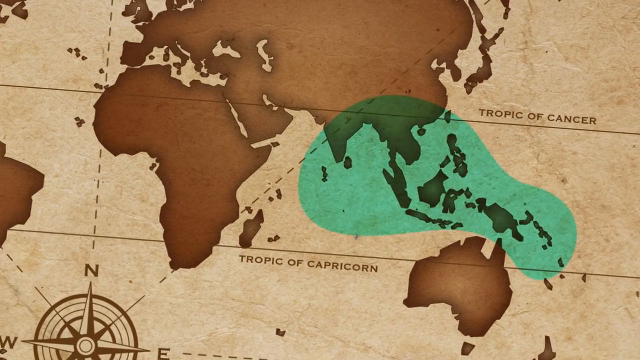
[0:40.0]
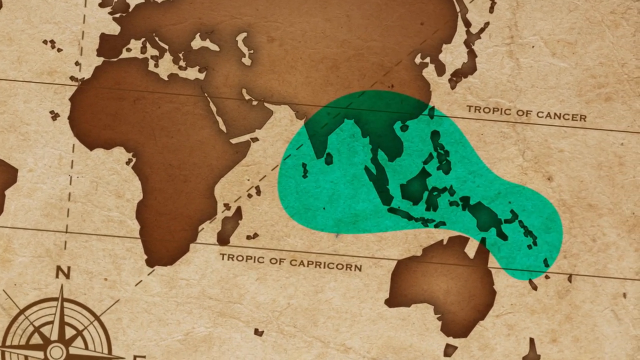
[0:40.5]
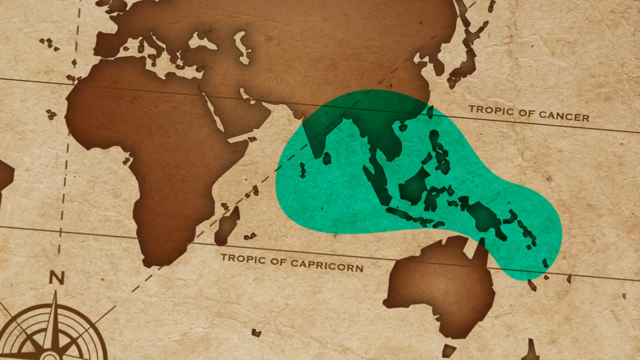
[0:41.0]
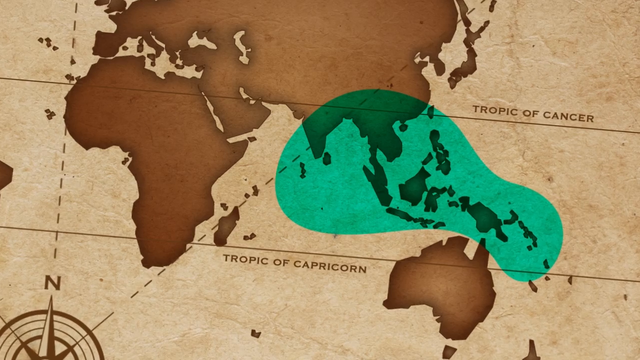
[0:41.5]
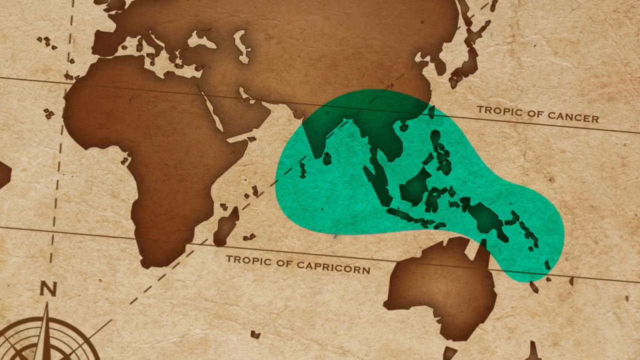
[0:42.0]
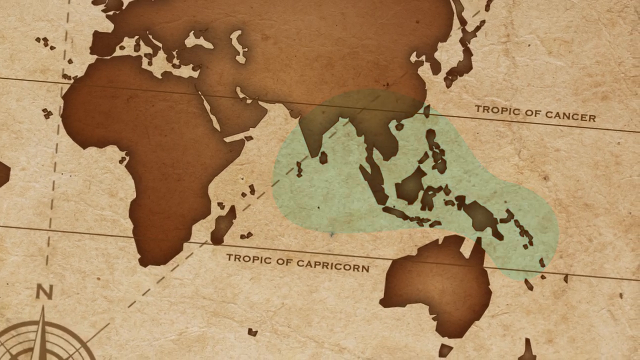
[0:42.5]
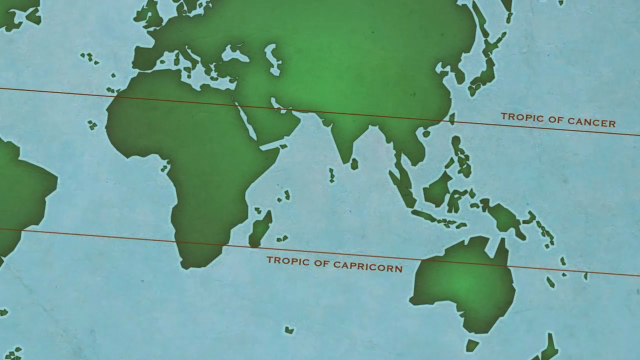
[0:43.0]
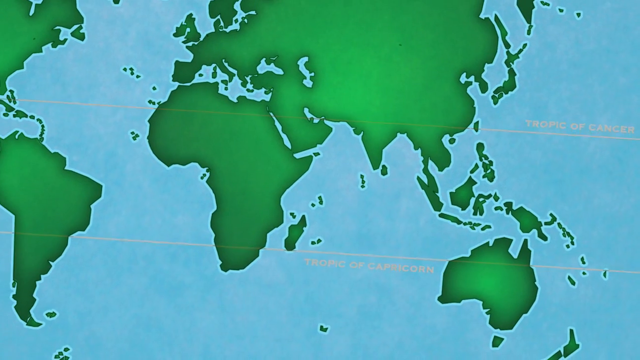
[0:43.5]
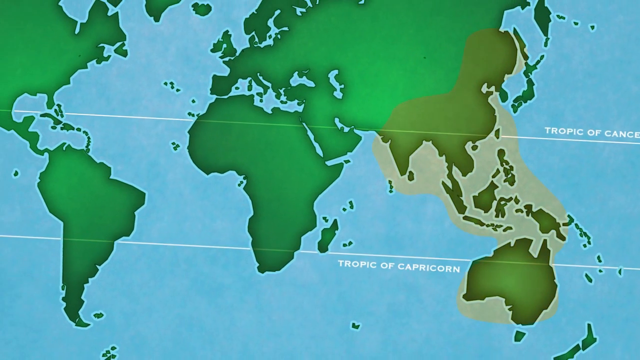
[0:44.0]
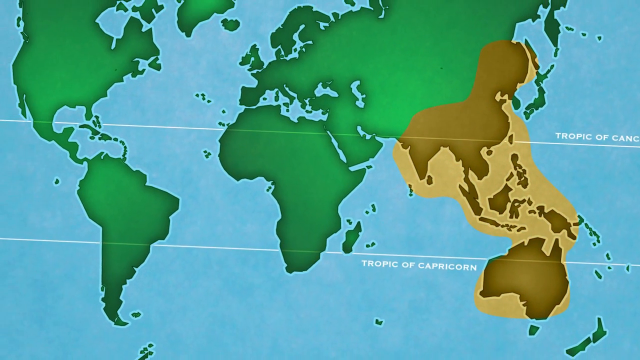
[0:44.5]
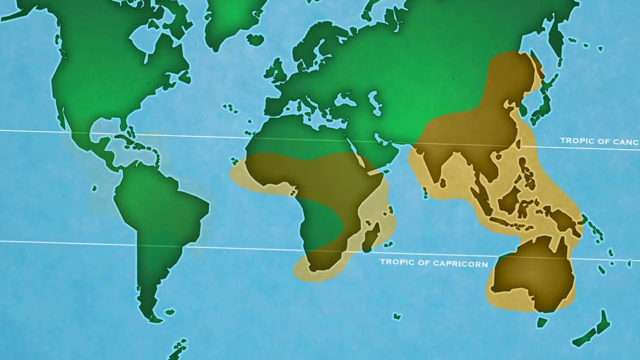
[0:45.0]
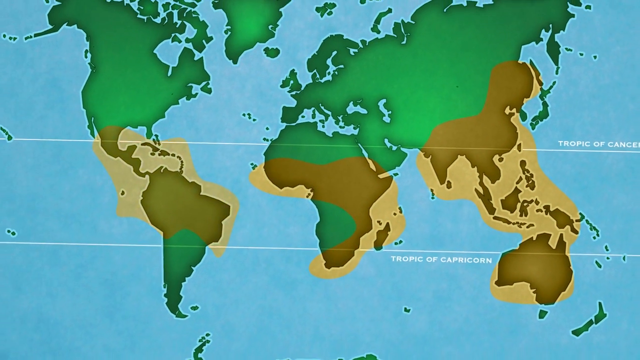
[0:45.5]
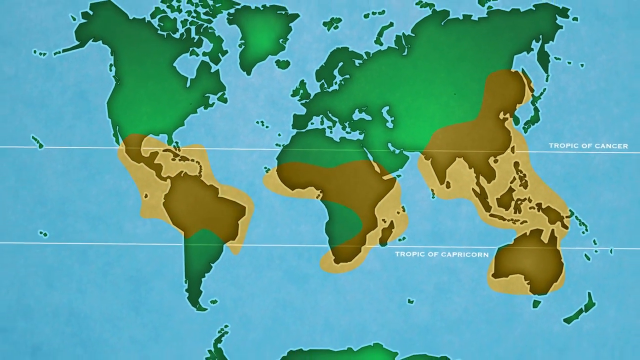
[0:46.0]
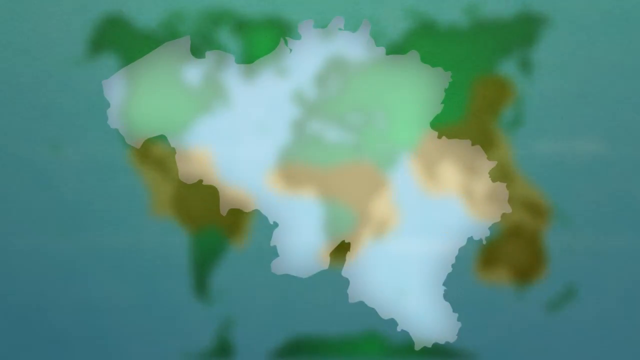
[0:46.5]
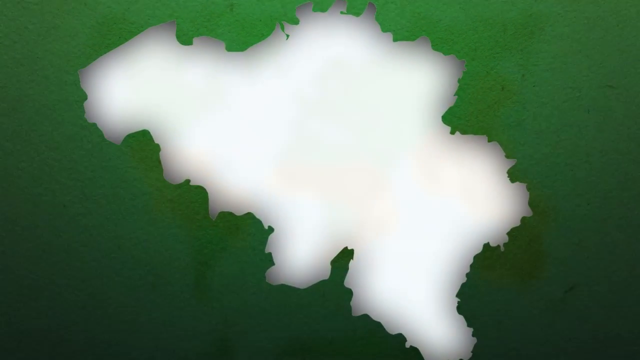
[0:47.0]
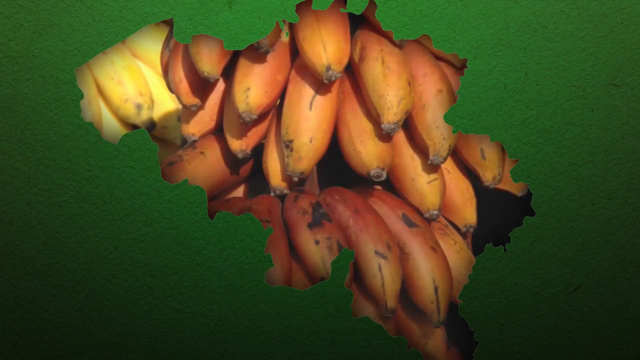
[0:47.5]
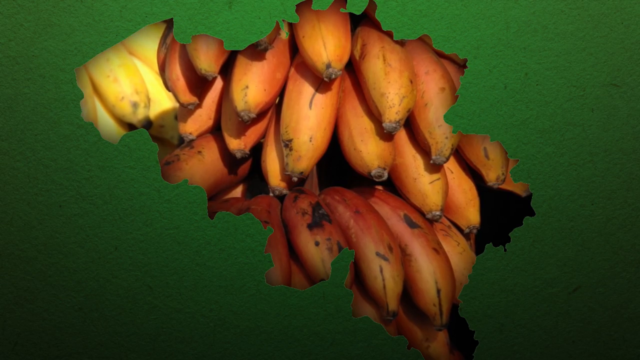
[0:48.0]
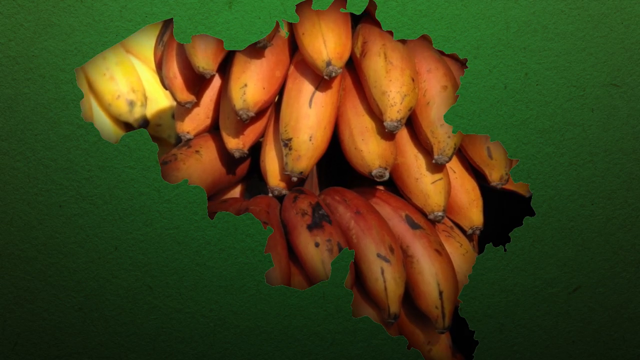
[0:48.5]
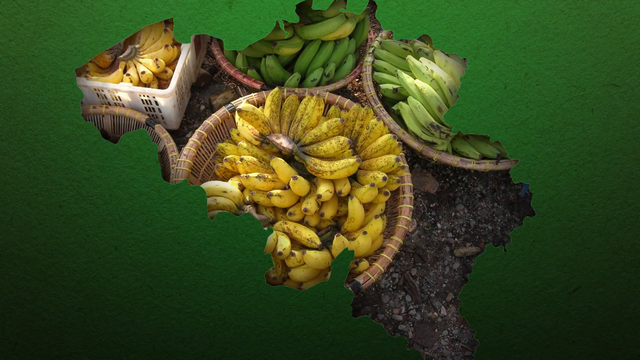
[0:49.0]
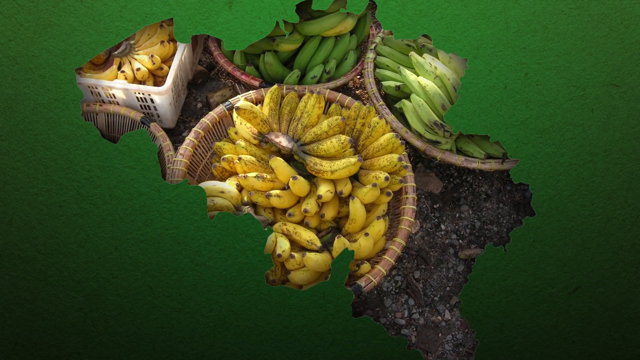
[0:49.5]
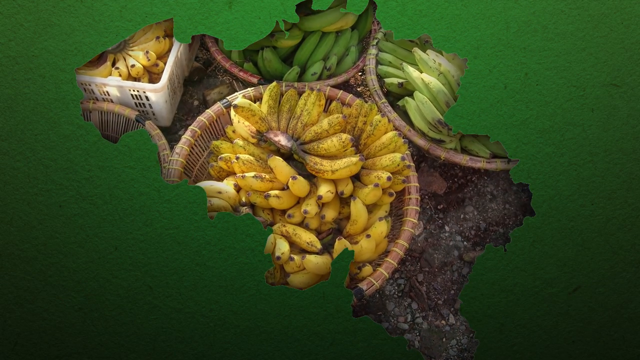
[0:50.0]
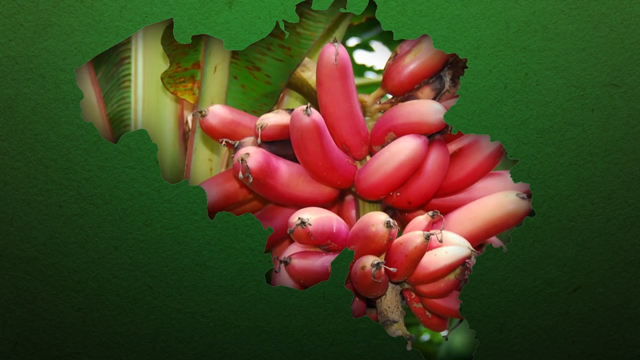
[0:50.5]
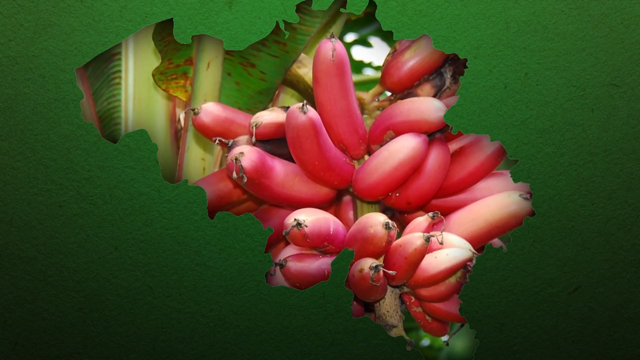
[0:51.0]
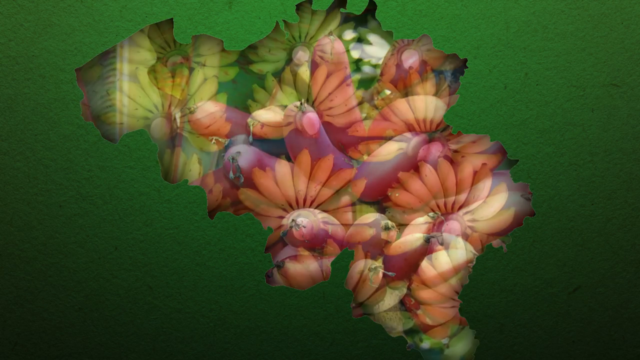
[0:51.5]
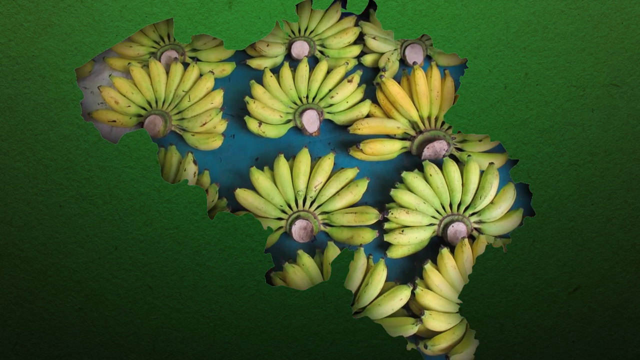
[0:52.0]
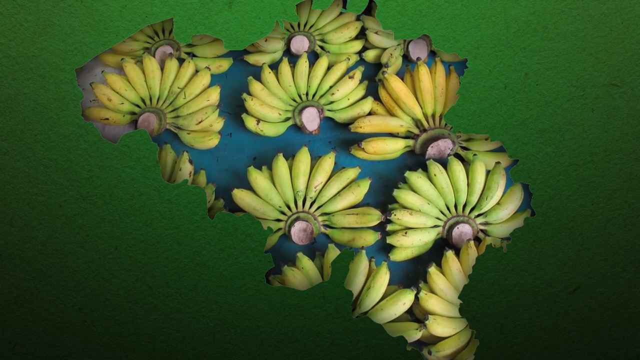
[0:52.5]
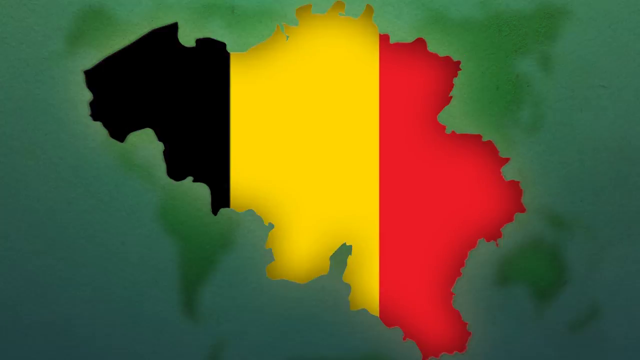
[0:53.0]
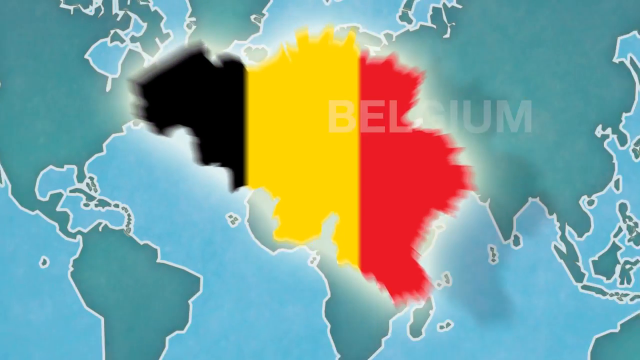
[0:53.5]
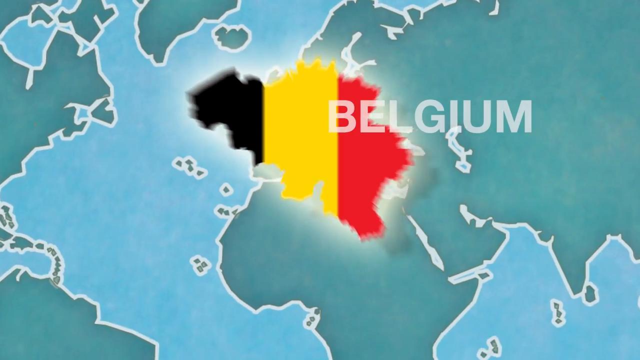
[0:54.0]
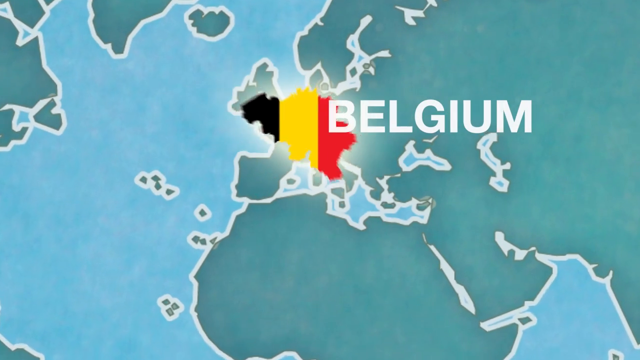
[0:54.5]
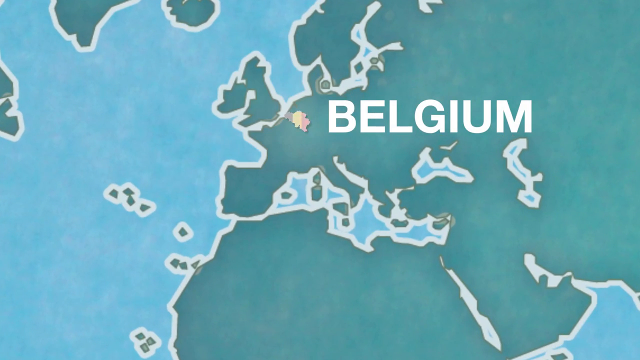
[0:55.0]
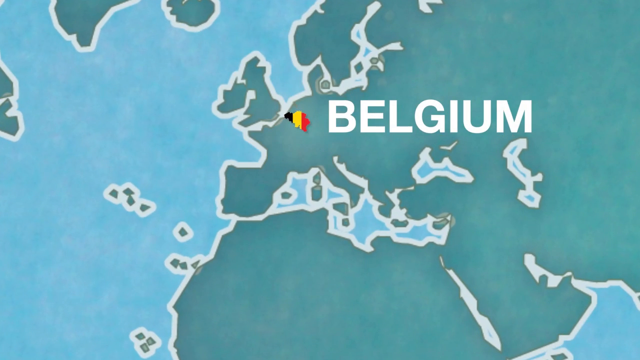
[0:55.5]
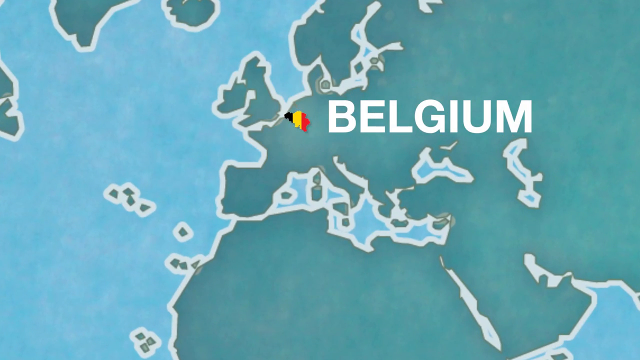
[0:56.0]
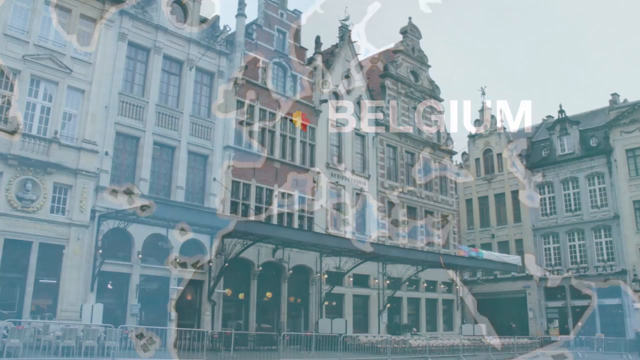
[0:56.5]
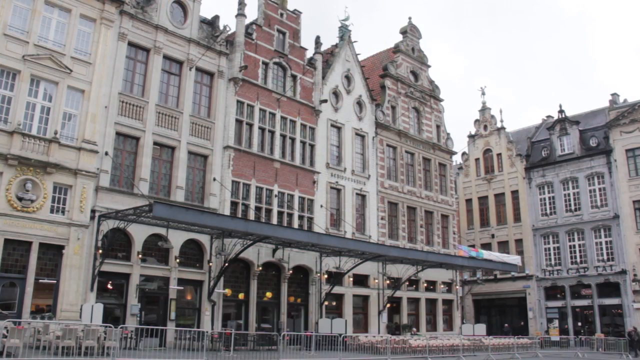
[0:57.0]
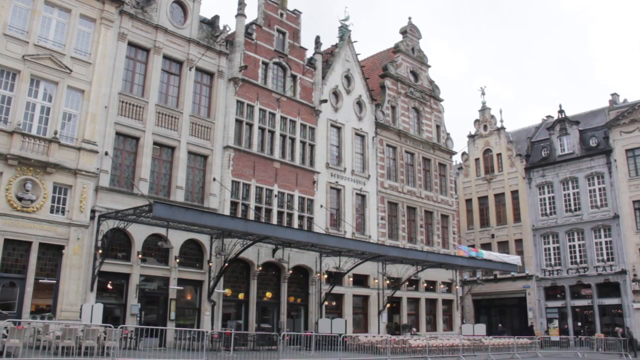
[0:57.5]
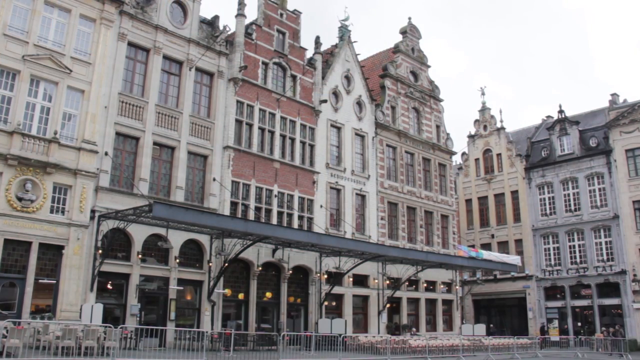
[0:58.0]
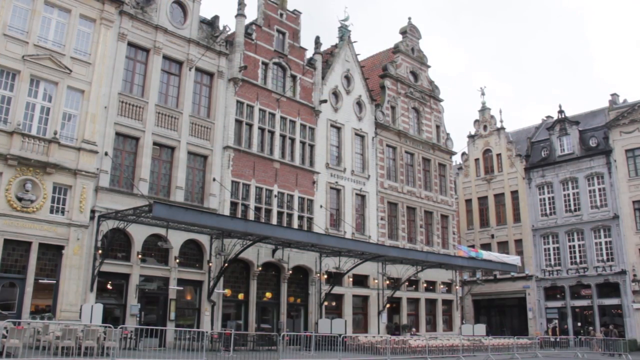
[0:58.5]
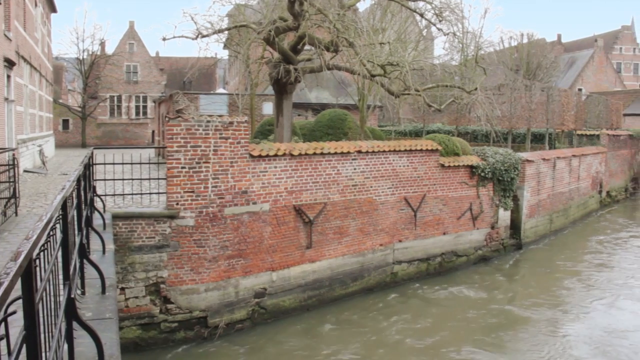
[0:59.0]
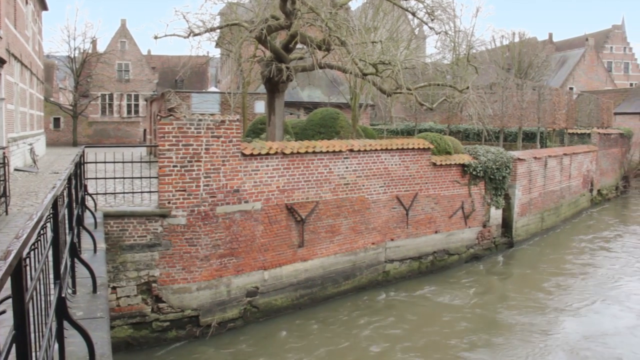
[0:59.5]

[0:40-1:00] The map shows the area between the Tropic of Cancer and the Tropic of Capricorn. It zooms out and highlights other areas on the map, apparently Africa and South America. After leaving the map, the view zooms in on a country whose outline is made to look like bananas, and a picture of actual red and yellow bananas appears. A series of photographs shows different types of bananas. Then the country of Belgium and the word "Belgium" appear on the screen, followed by an image of attached buildings, presumably in Belgium. Next comes a lake or stream view, with water flowing in the middle like a dam, before the view returns to the map of the space between the Tropic of Cancer and the Tropic of Capricorn.